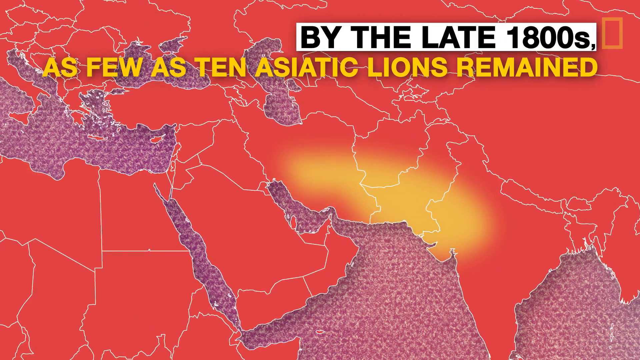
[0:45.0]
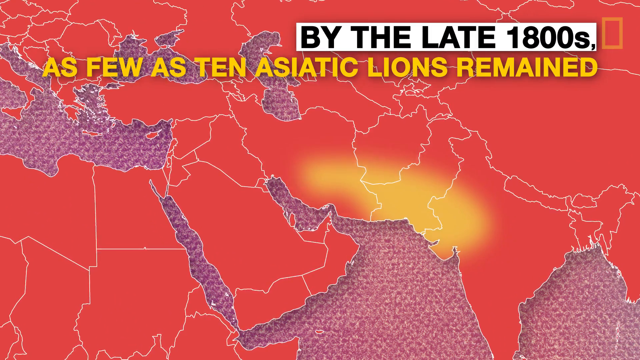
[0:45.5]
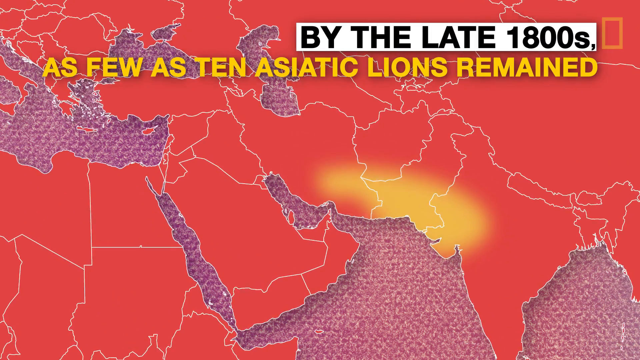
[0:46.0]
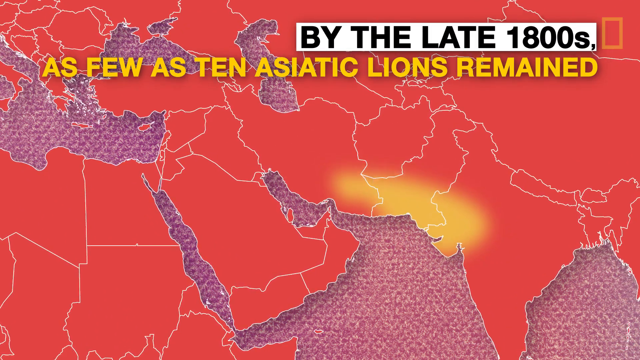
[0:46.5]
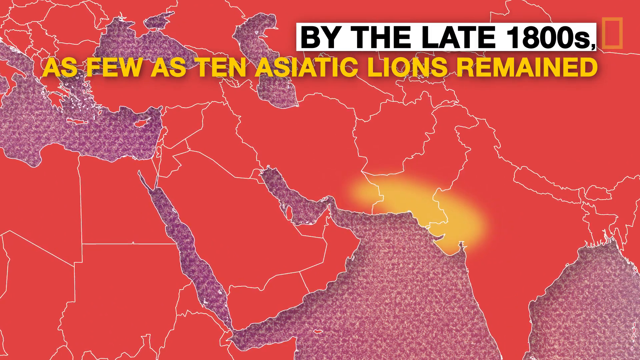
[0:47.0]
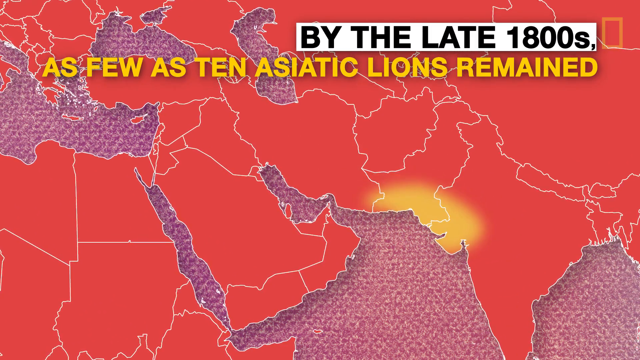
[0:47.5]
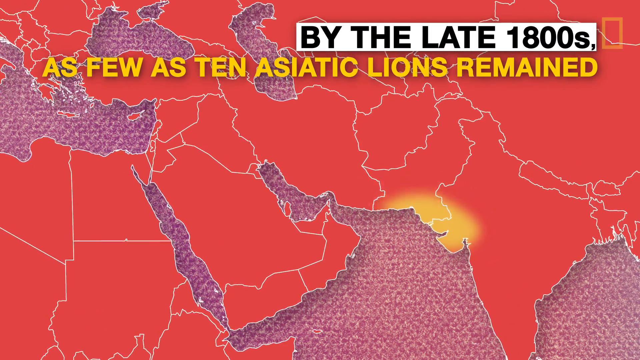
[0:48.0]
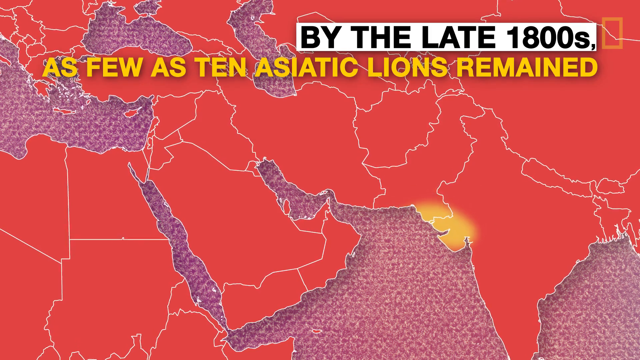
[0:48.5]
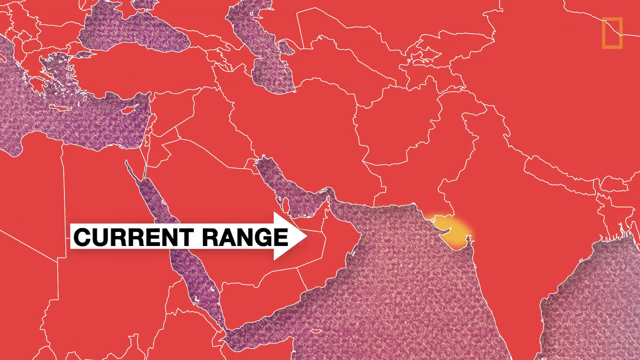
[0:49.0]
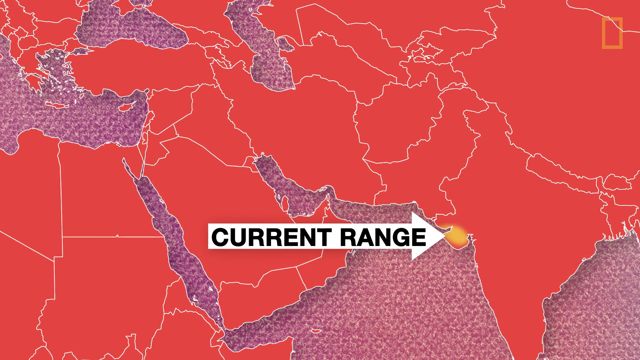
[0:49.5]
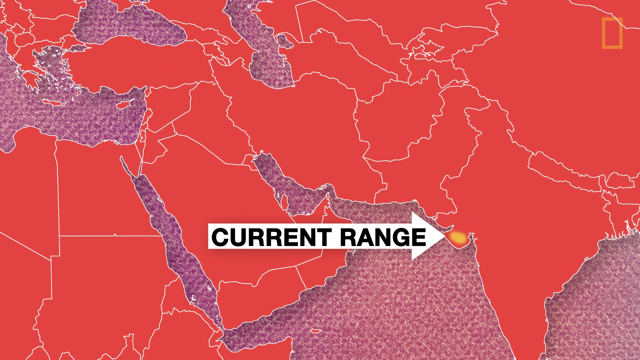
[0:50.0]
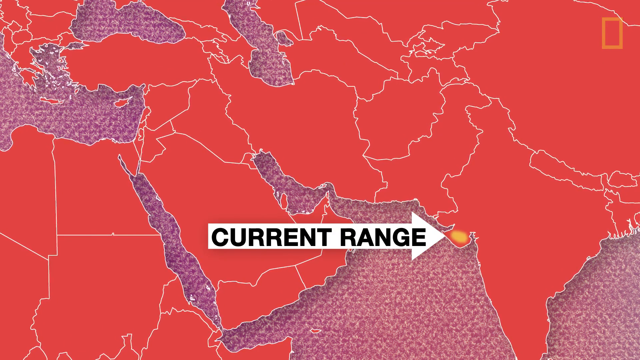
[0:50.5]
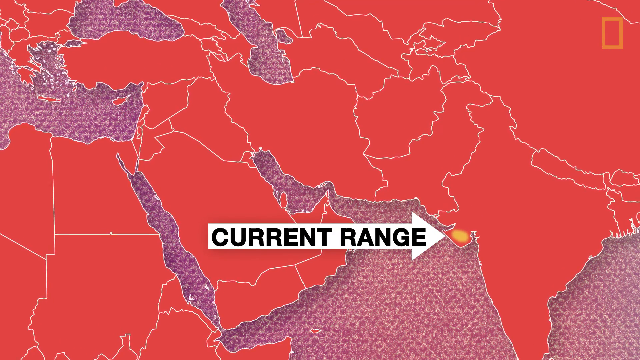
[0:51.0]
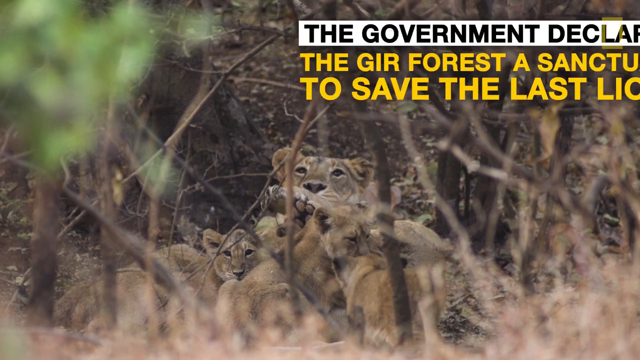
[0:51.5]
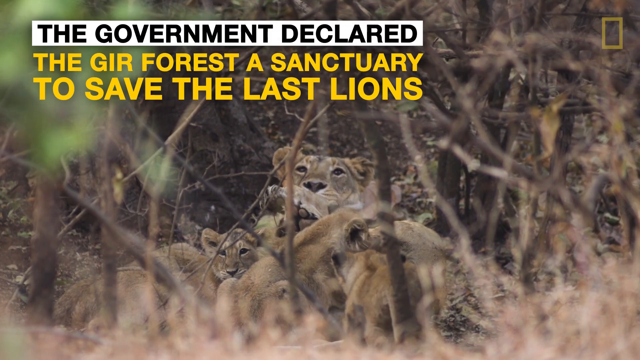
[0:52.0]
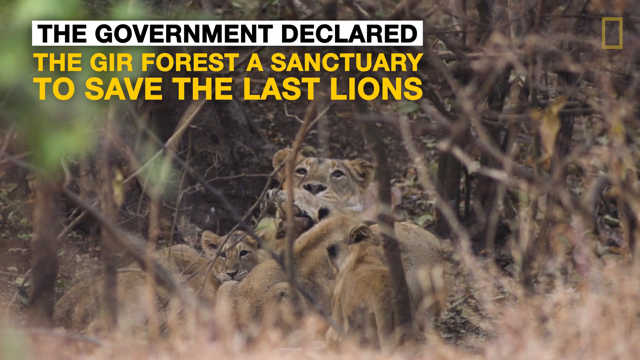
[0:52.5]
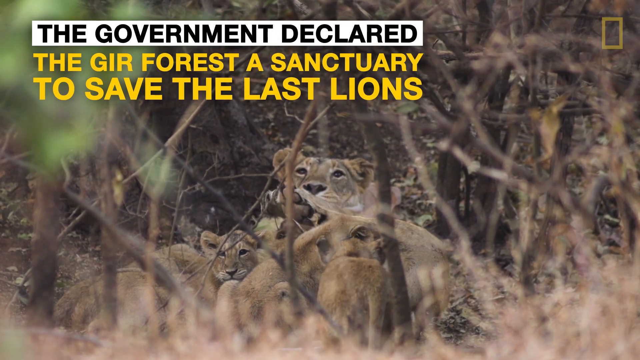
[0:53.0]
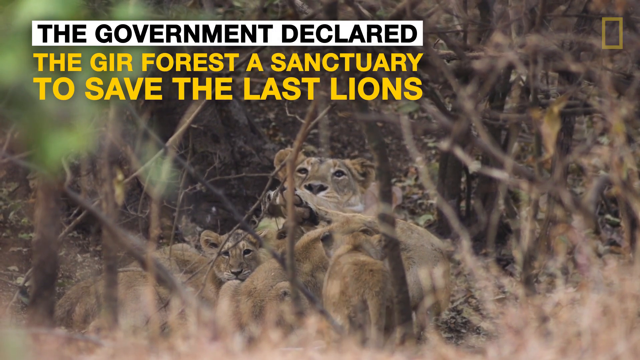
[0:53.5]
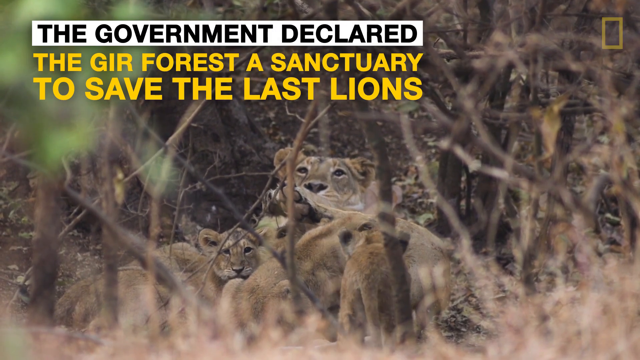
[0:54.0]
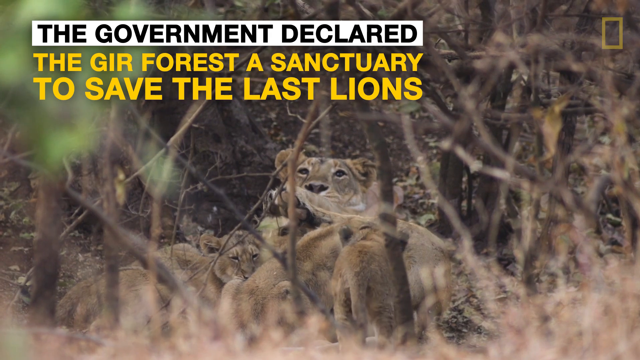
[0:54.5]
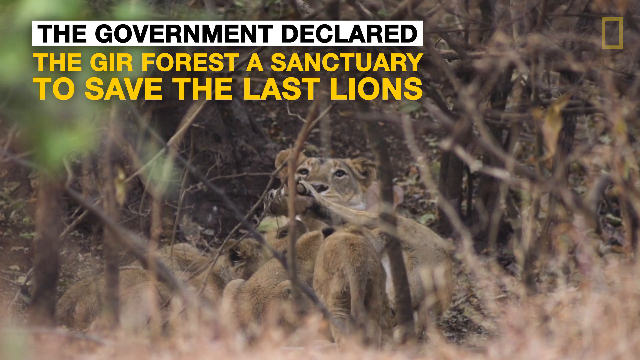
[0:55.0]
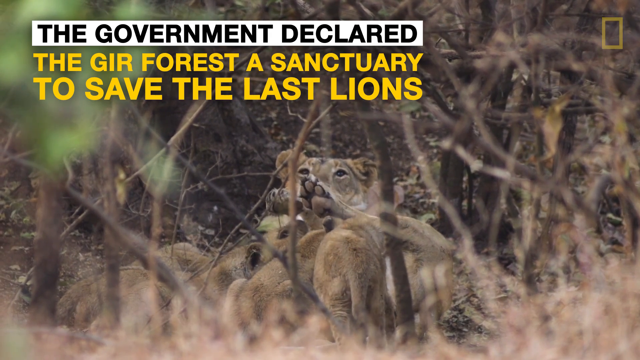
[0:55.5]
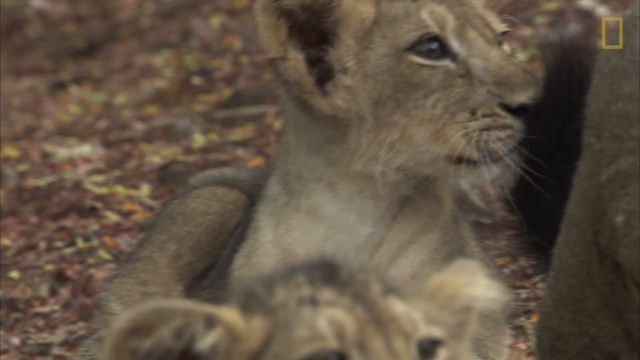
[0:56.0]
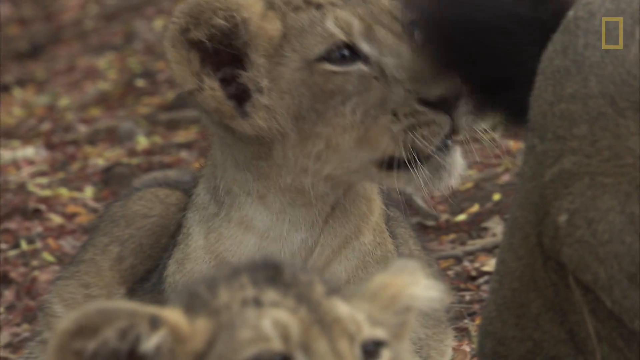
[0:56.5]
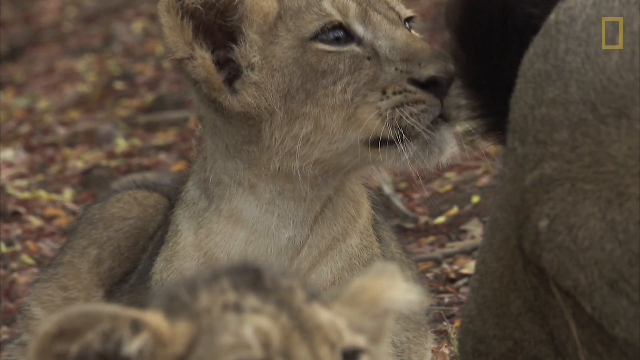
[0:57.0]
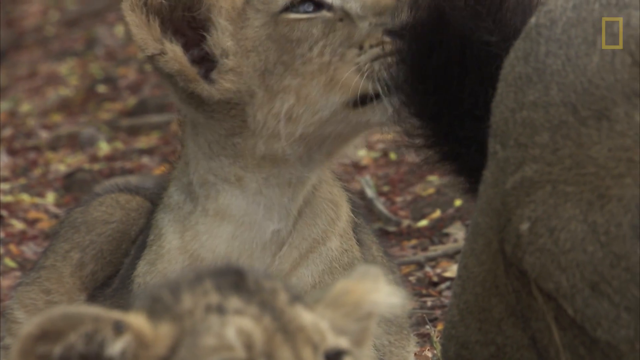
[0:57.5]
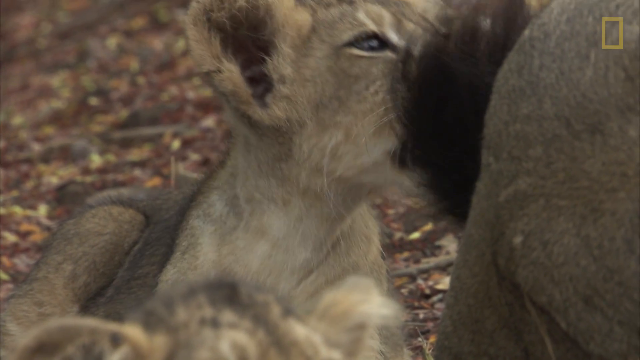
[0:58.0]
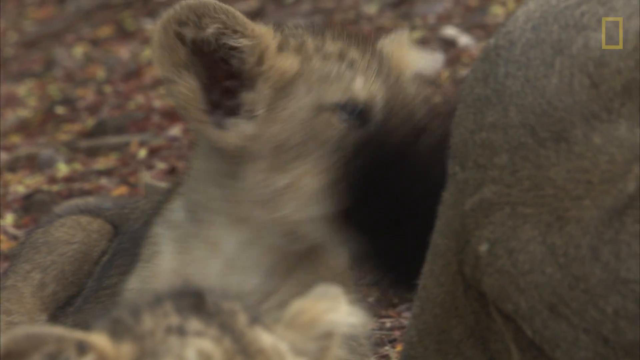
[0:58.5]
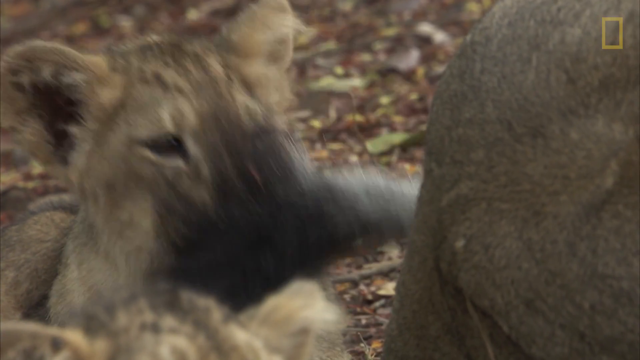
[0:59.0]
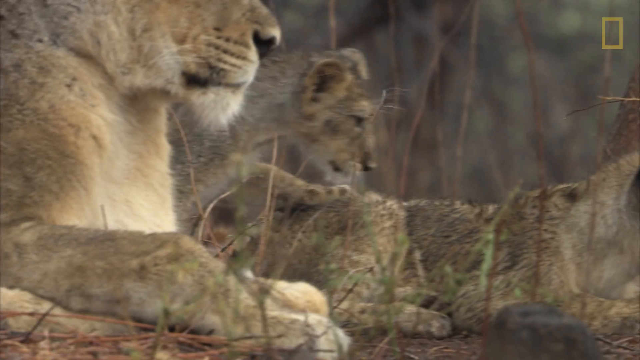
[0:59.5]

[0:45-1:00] On-screen text says "by the late 1800s, as few as 10 of these lions remained," and the graphic then points to where the current range is. The video cuts back to the lions, which look fuzzy. Text also says "the government declared that the Gir forest is a sanctuary for these lions." A baby lion is shown.